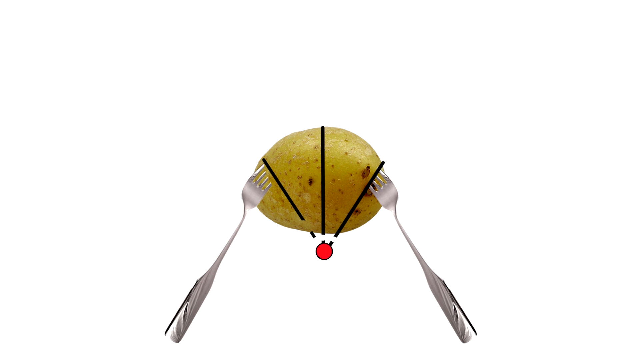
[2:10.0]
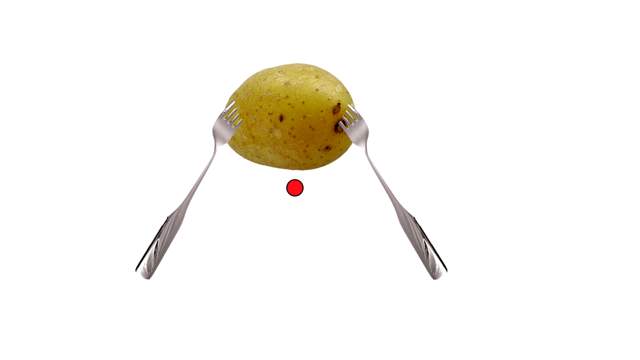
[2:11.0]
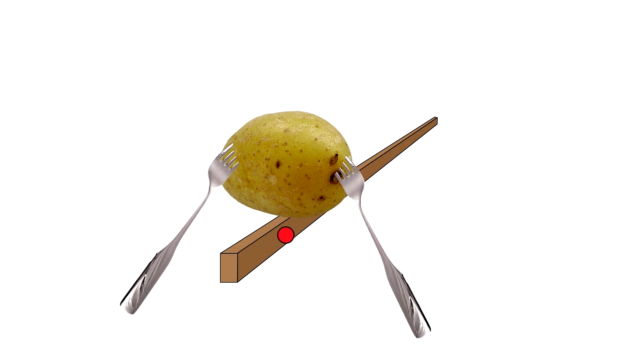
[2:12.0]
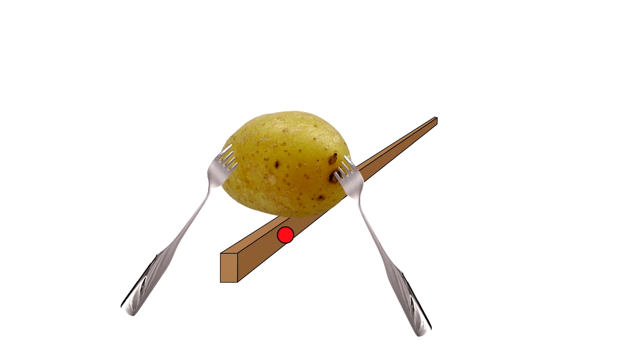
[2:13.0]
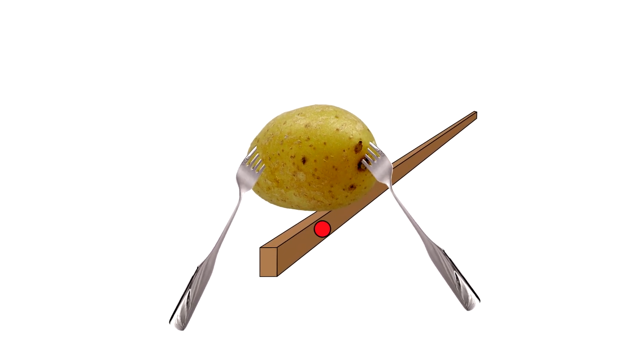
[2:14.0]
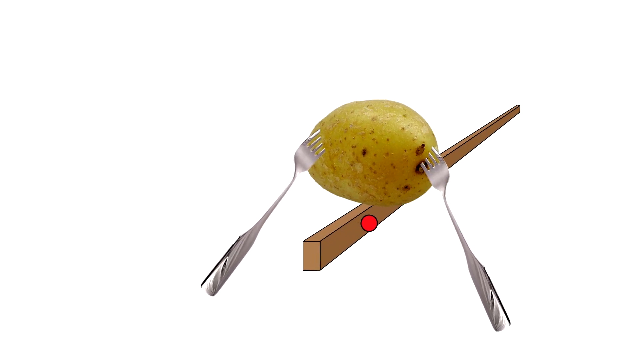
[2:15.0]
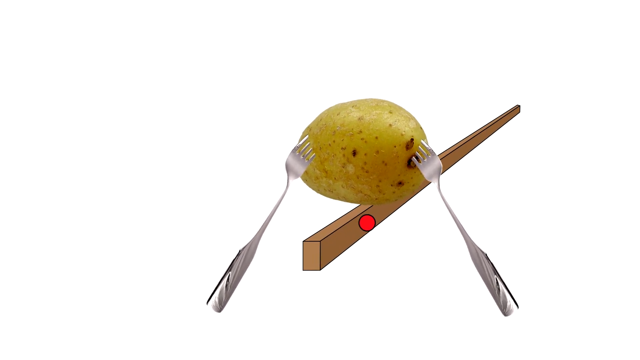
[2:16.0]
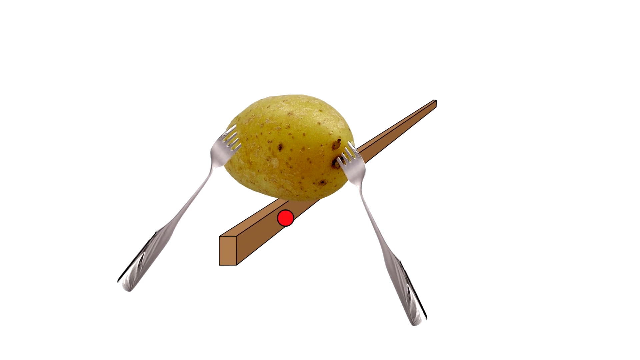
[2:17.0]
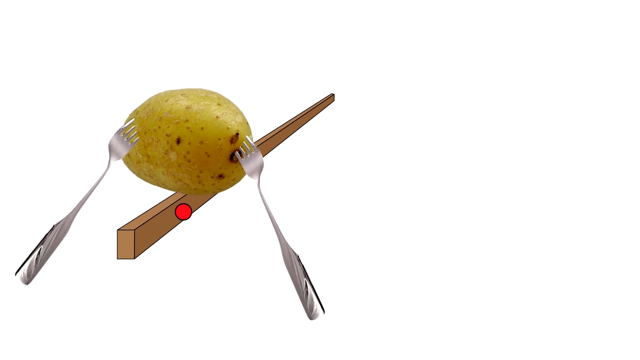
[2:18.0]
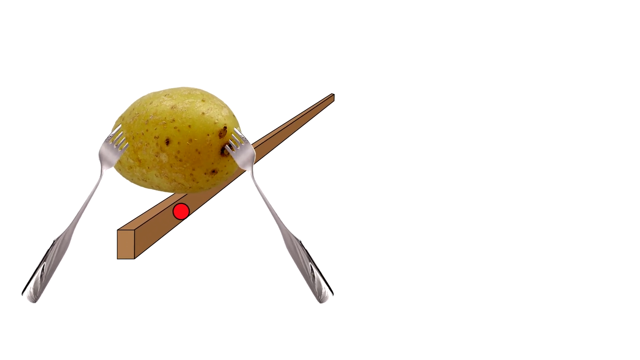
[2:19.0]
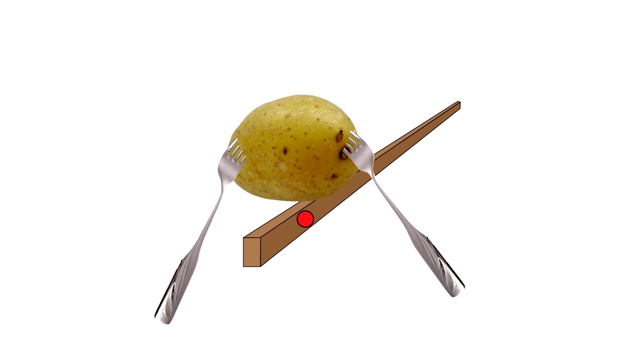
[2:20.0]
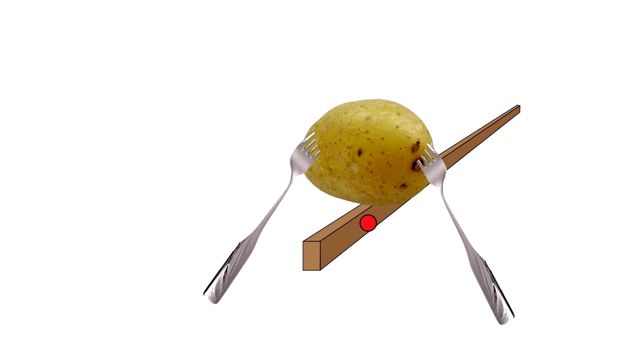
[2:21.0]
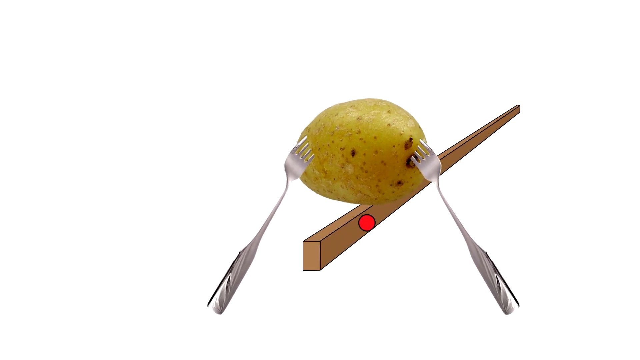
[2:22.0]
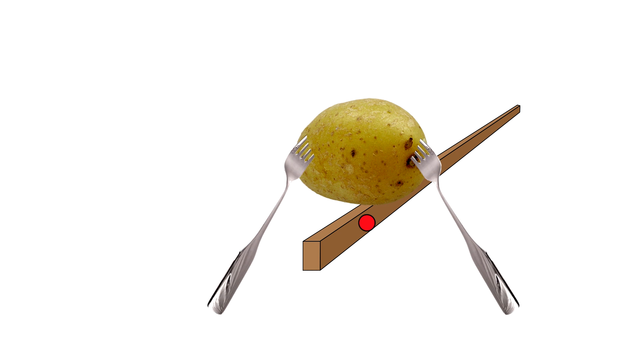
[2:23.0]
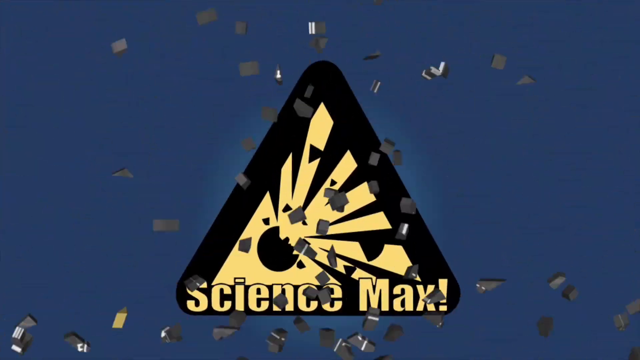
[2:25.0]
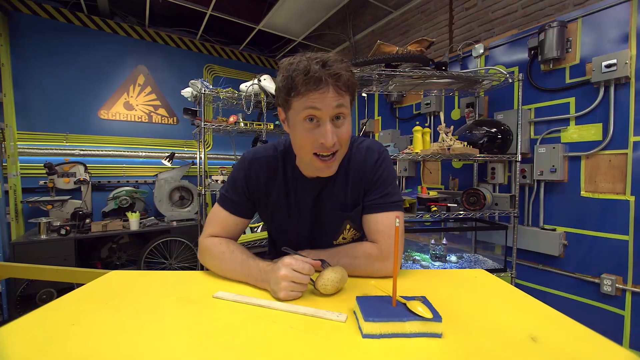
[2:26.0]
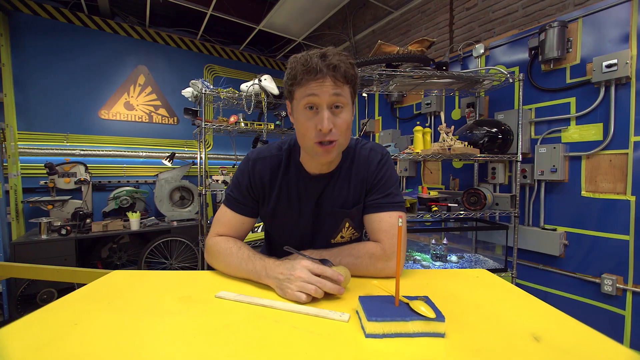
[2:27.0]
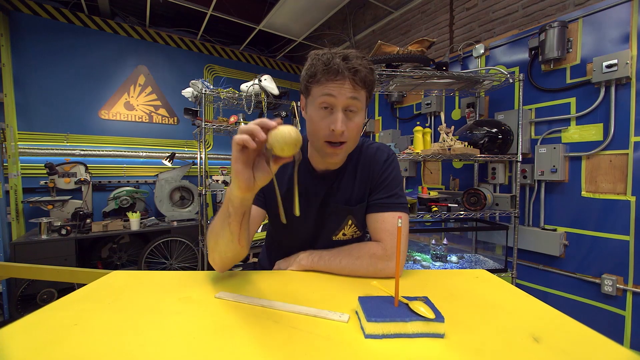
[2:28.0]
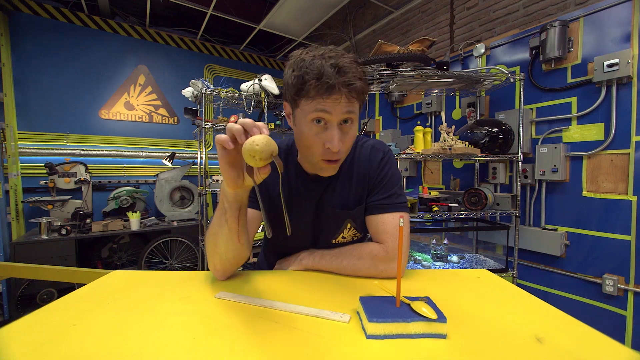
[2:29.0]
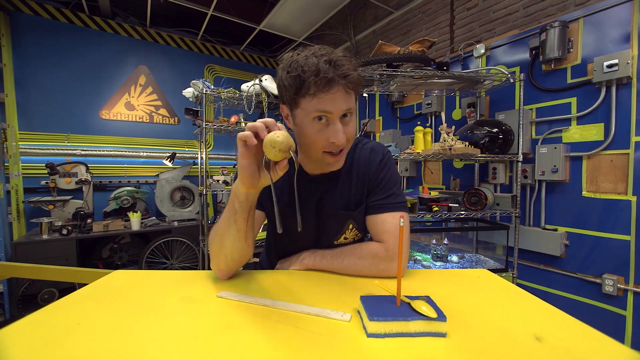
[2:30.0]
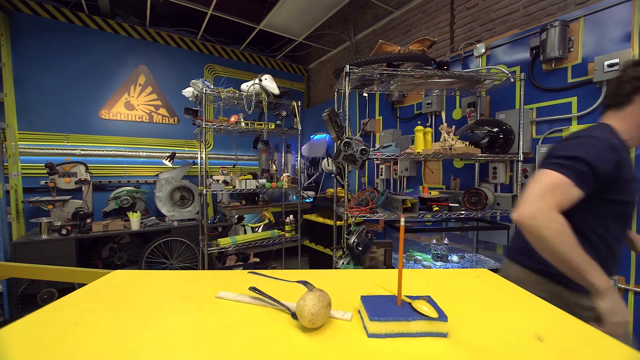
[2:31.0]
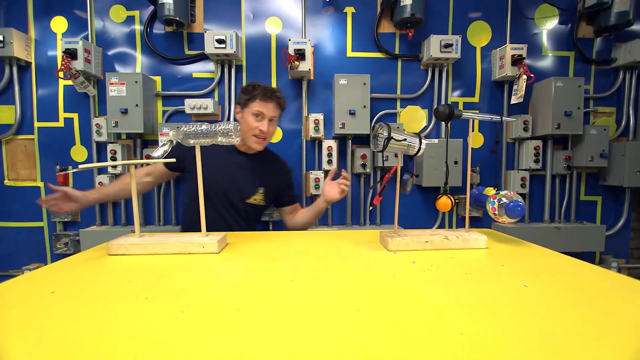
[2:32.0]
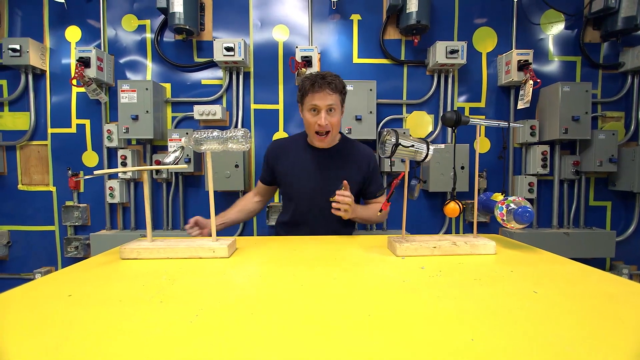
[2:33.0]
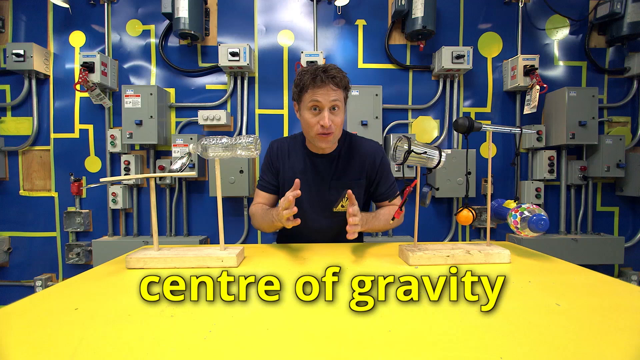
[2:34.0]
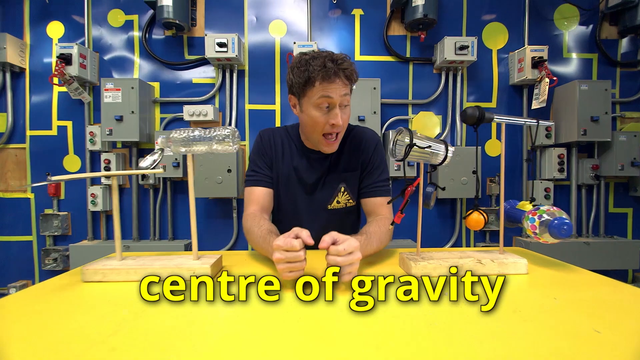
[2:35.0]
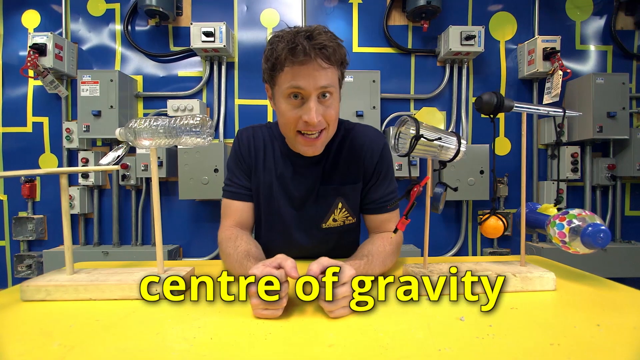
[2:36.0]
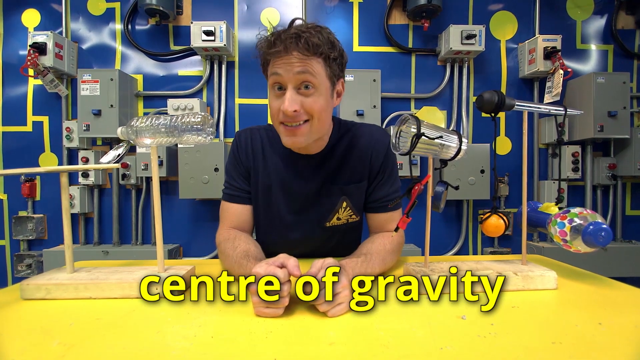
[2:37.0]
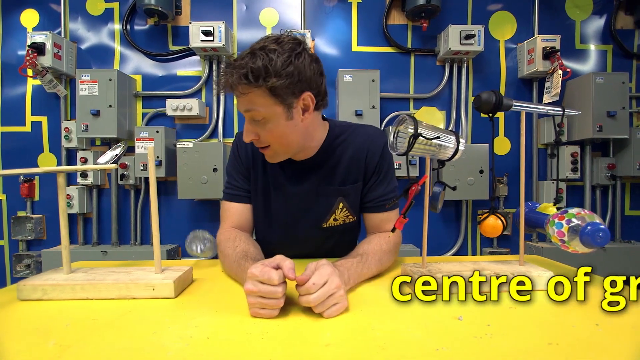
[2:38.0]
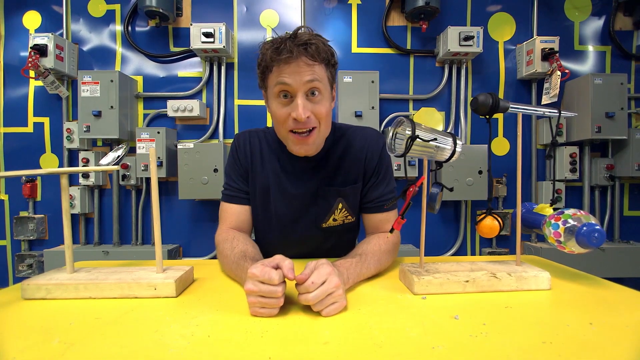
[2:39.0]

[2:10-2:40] In the middle of a white background is a photo of a potato with two forks inserted into its left and right sides; the fork on the left points up and to the right, and the fork on the right points up and to the left. Three black lines run through the potato: the middle line is vertical through its center, and the leftmost and rightmost lines run diagonally, down to the right and down to the left respectively. The three lines intersect at a red dot slightly beneath the potato. The potato is moved up and to the left, and the black lines disappear. A long wooden board illustration appears against the white background, and the potato is placed down on its edge. The potato rocks back and forth to the left and right before stabilizing on top of the board. The potato and board are moved to the right and up, and the potato rocks back and forth again before stabilizing. They are moved to the left side of the frame, and the potato rocks back and forth on the board again before stabilizing. They are then moved to the right side of the frame, and the potato rocks back and forth on the board's edge before stabilizing. The video switches to an image of the E equals mc squared formula, which shatters, and in its place is the Science Max logo against a blue background. The man with the dark blue shirt and brown hair then leans forward onto the yellow table. To the left of his right hand is a ruler; on the table is a blue pad with a pencil stuck into it, and to the right of the pencil is the yellow spoon, laid face down. To the right of his right hand is the potato with the two forks in it. The man faces the viewer and leans in as he speaks to the camera, looks down, and raises the potato in his right hand, holding it up easily as he continues speaking toward the viewer. He steps to the right side of the frame, in front of a new yellow table. On this table are two wooden boards with wooden pillars on them, each pillar balancing an item: on the left board, a wooden piece and a water bottle are balanced on the pillars; on the right board, a flashlight and an object that looks like a beaker or a microphone are balanced. The man steps to the right with his arms outstretched as he speaks toward the camera. The words "center of gravity" appear in yellow text from the left side of the frame and move to the center. The man brings his hands up in front of him and curls his fingers together as the camera zooms in on him. His gaze is toward the lower right of the frame before he brings it back up to the camera and smiles as he speaks. The man nods his head and the bottle of water falls from one of the wooden pillars. He turns his head to the right to see it fall, then turns his head back forward and smiles as he continues speaking.